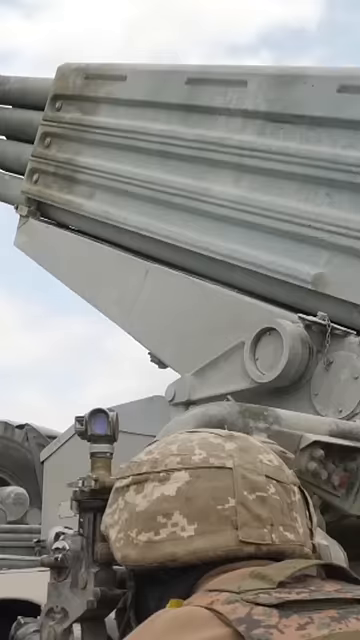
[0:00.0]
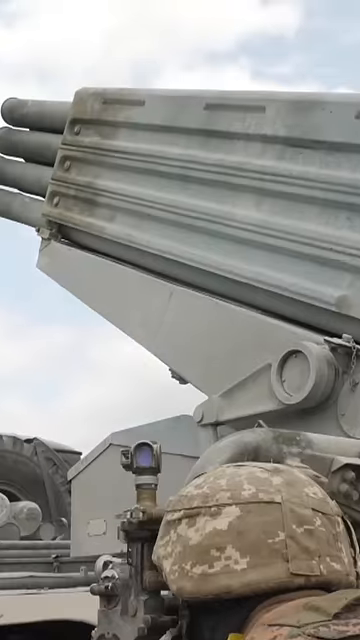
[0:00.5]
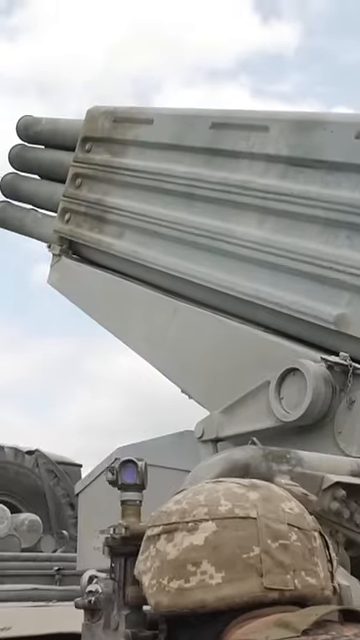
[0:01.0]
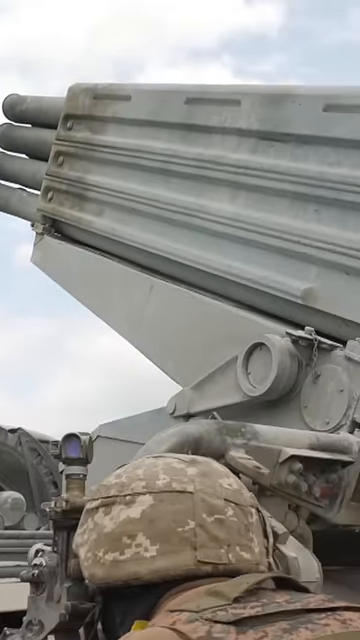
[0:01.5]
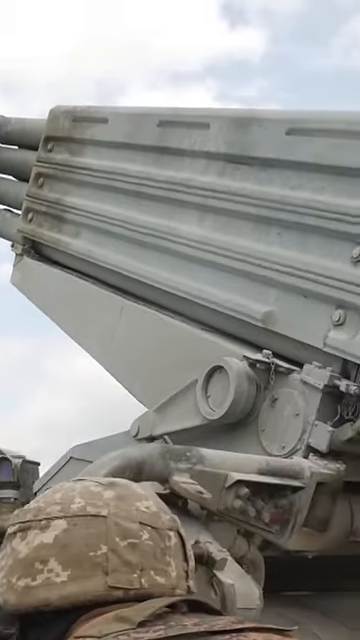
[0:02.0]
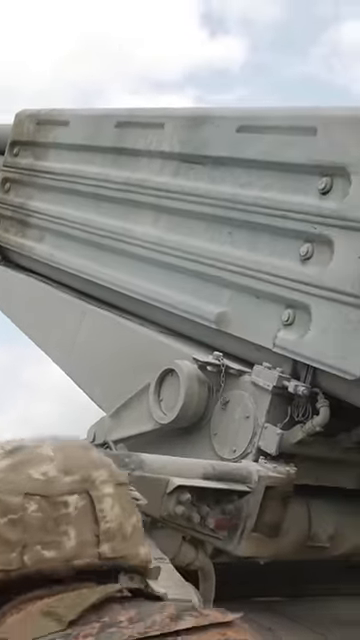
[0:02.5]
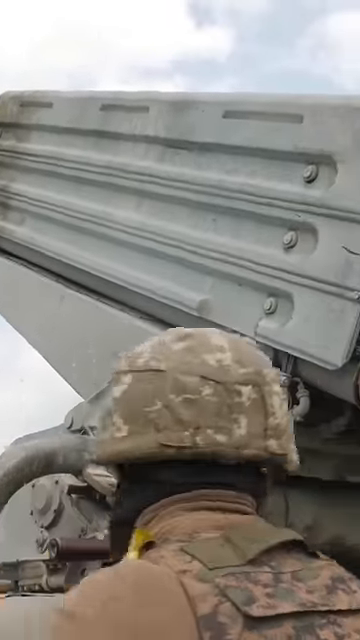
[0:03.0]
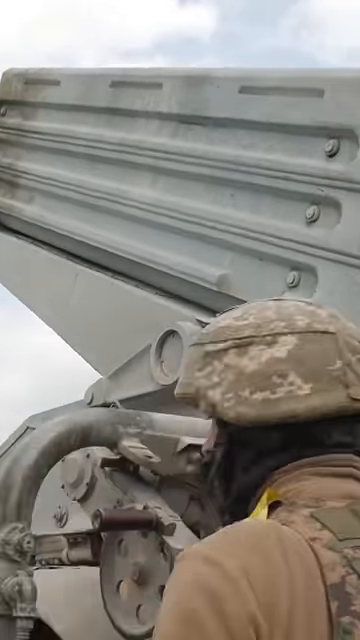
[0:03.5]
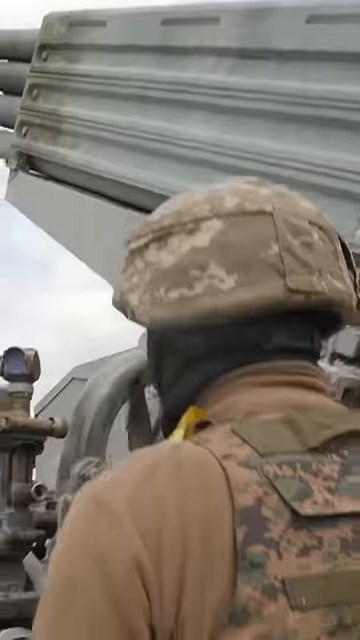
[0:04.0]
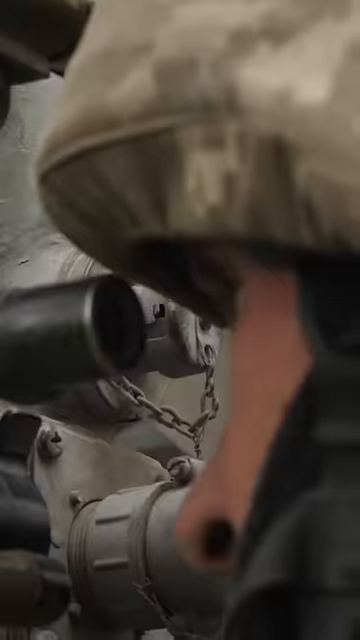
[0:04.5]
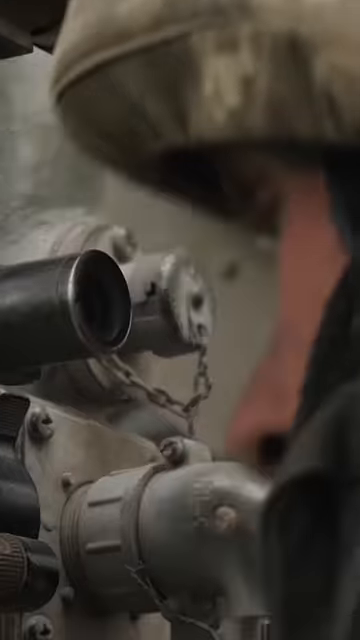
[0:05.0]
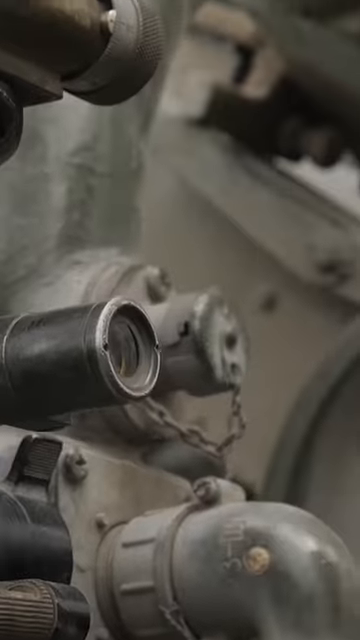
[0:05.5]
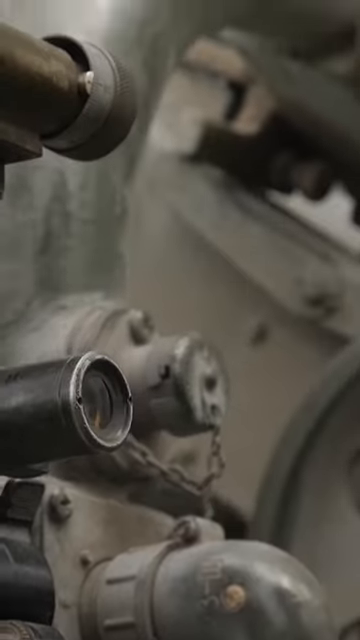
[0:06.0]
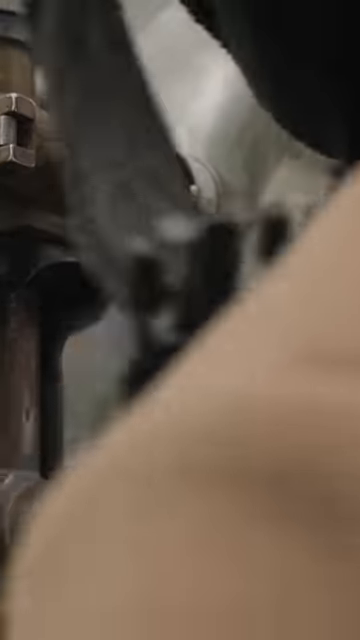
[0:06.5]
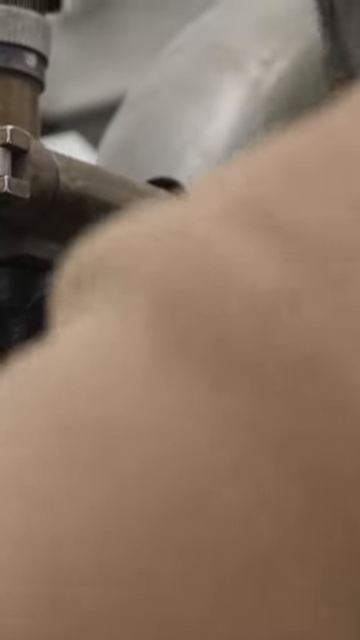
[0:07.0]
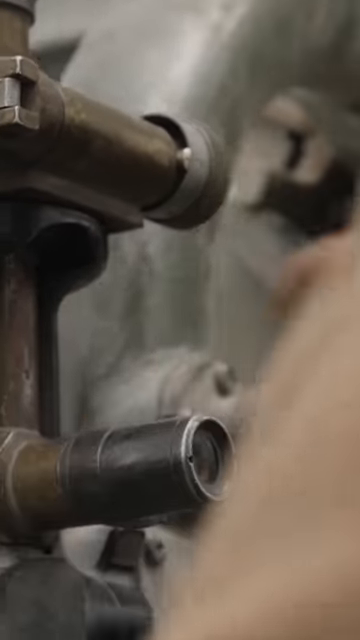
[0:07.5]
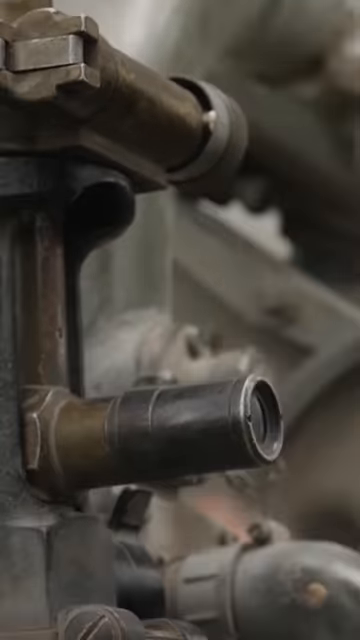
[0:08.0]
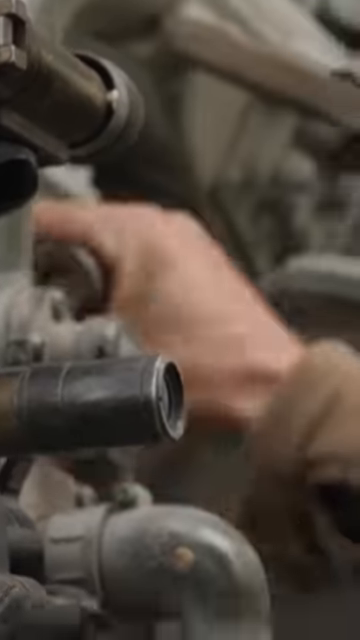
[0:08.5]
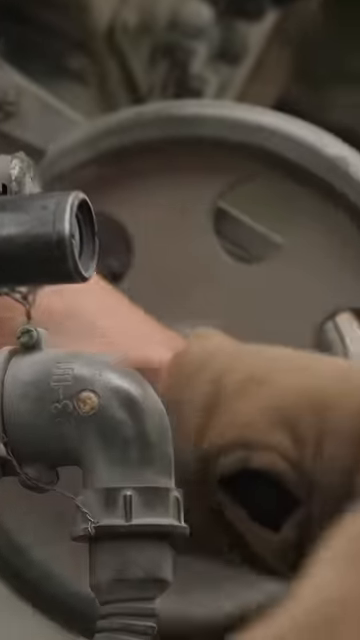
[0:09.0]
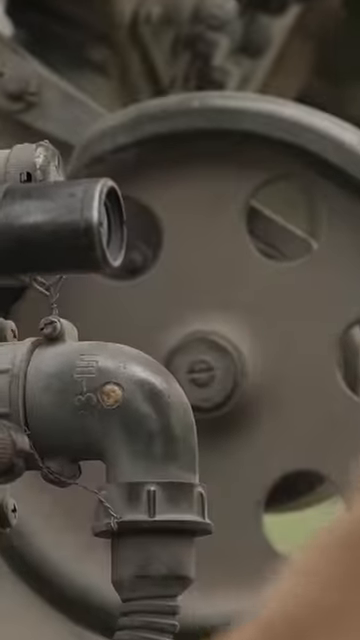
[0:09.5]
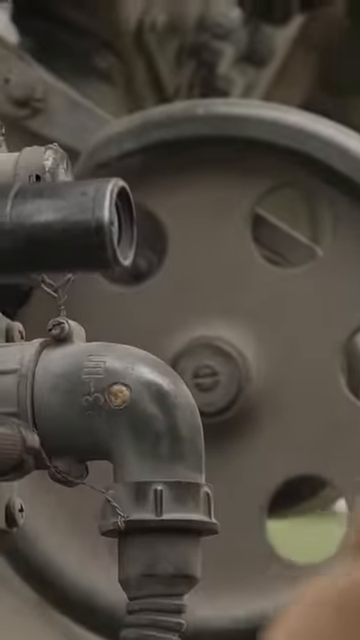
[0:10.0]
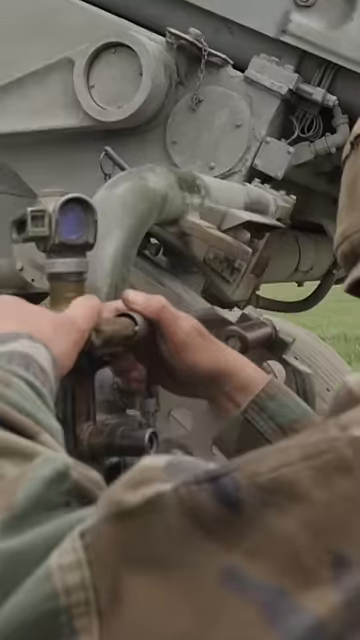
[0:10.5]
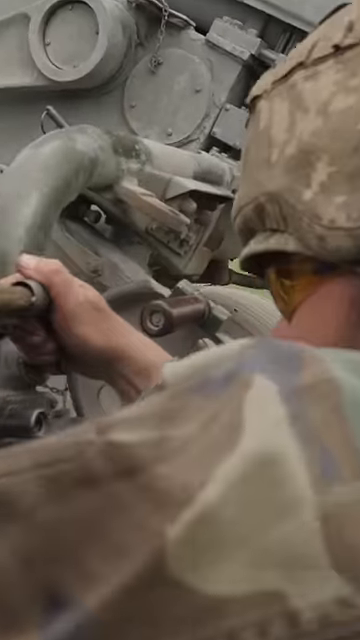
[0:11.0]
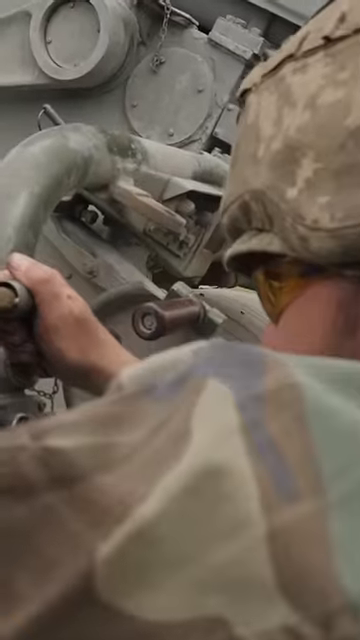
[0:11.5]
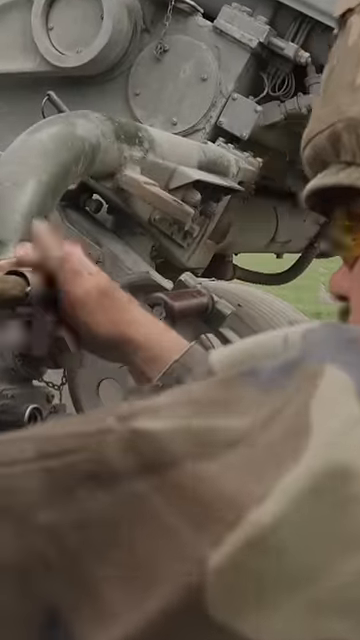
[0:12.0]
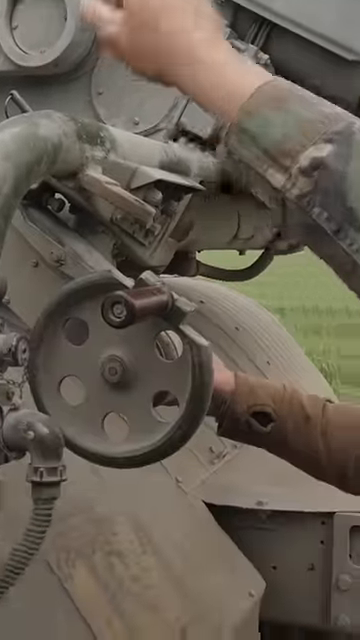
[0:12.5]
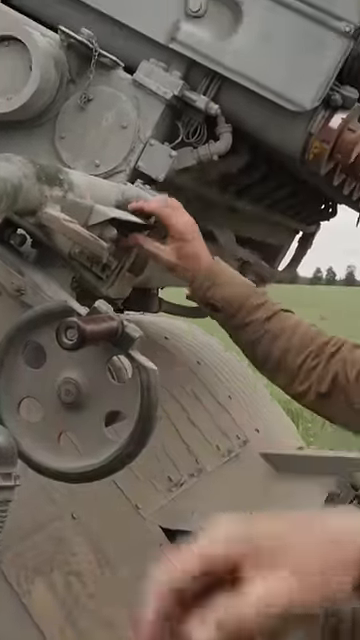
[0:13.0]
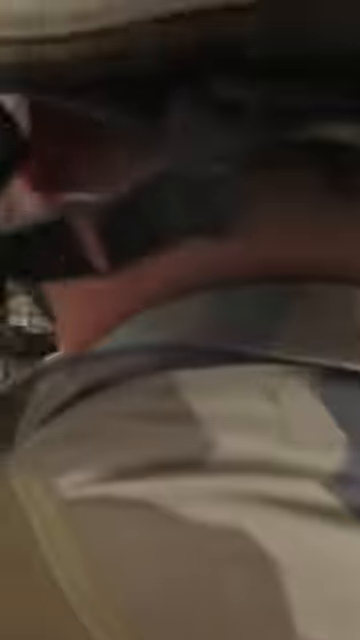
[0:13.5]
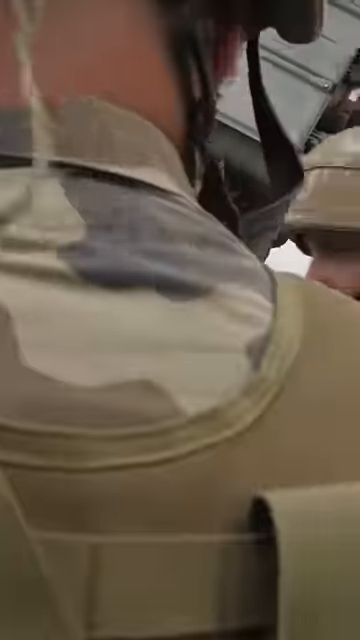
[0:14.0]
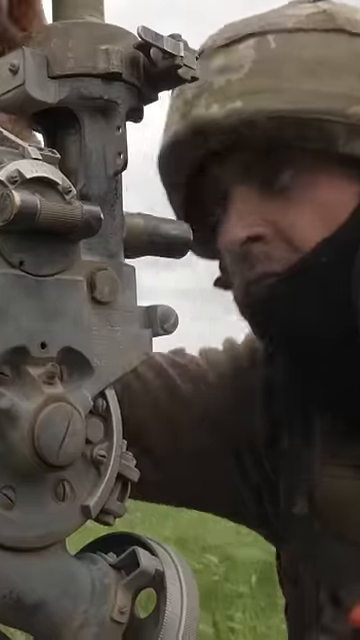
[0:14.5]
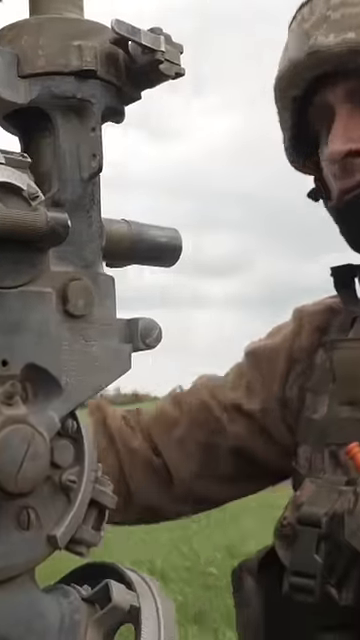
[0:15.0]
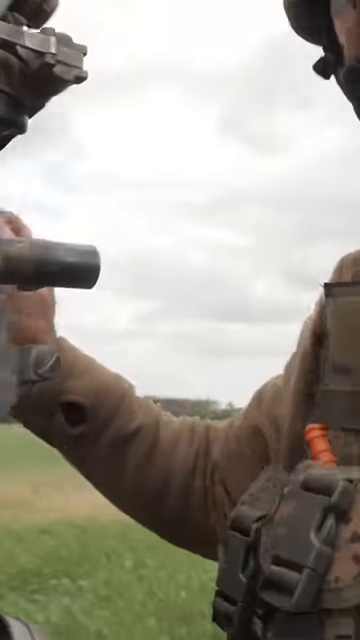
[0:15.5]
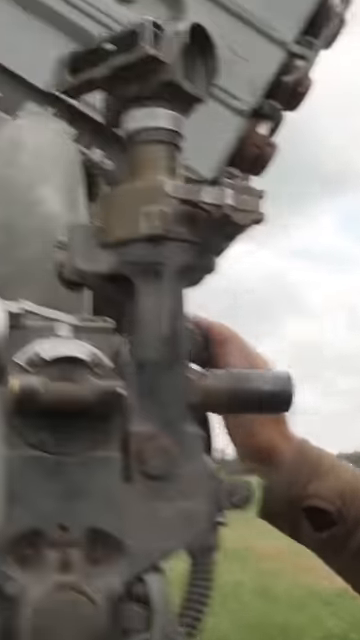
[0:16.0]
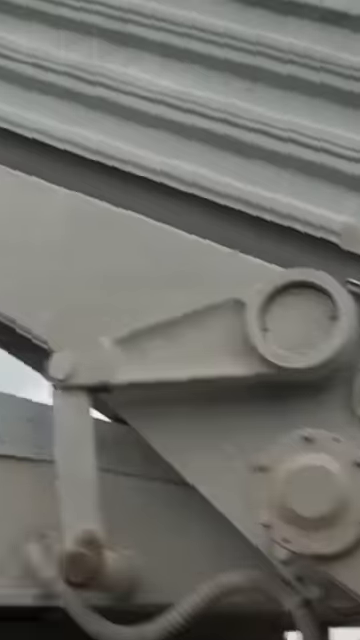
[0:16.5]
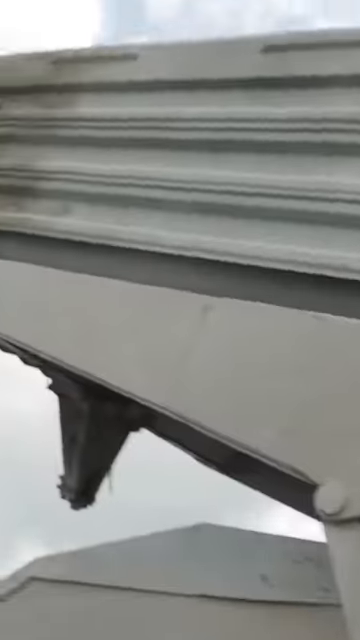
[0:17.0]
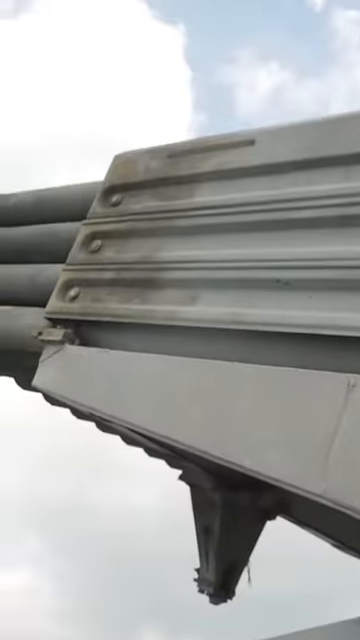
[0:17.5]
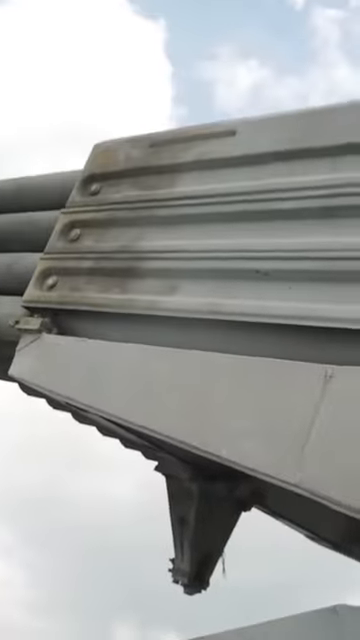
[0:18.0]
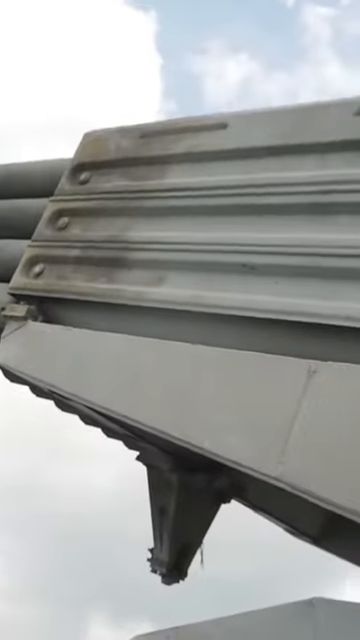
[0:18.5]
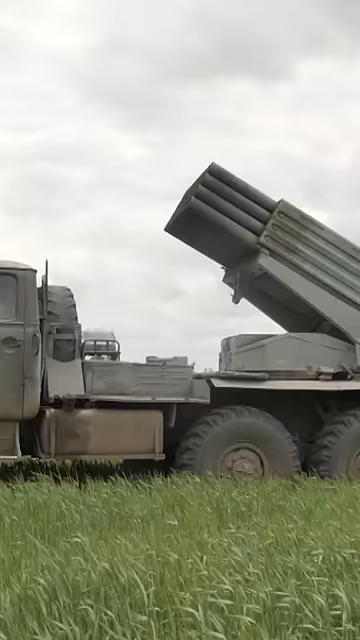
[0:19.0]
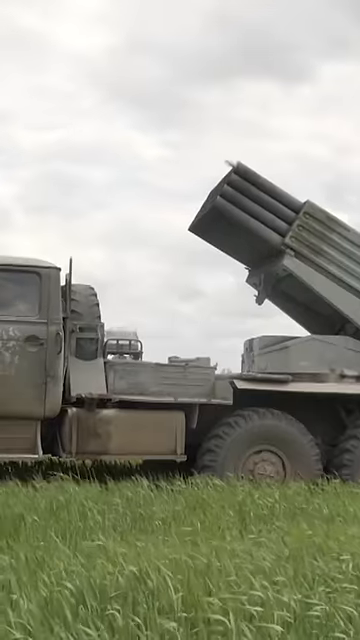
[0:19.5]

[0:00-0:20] An army man stands next to a rocket launcher, apparently some kind of ground-based one, making adjustments. Another army man is there, also making adjustments. The view then turns to the rocket launcher, a big gray launcher outdoors, with the two men in camo. No words or closed captions appear on screen. At the very end, one rocket is launched.